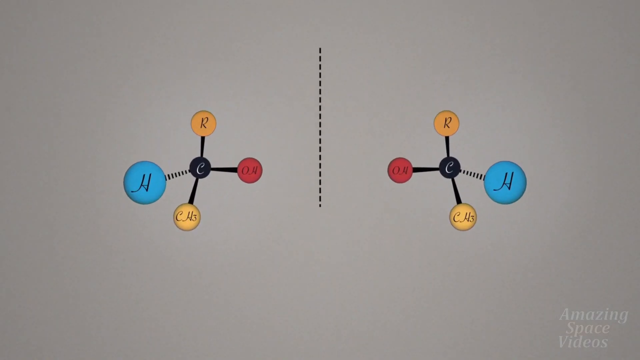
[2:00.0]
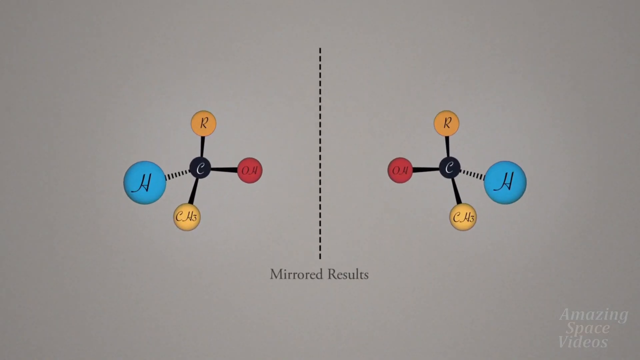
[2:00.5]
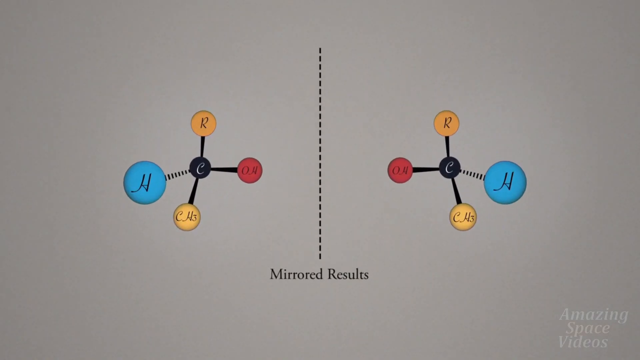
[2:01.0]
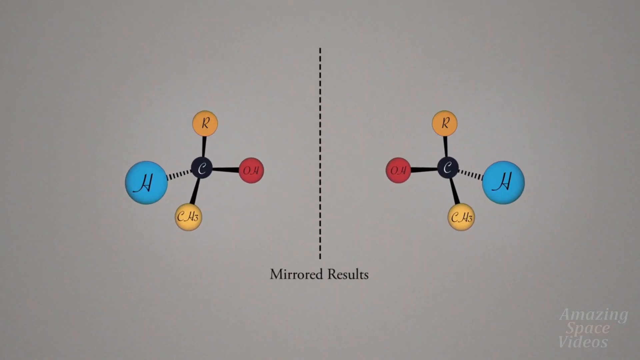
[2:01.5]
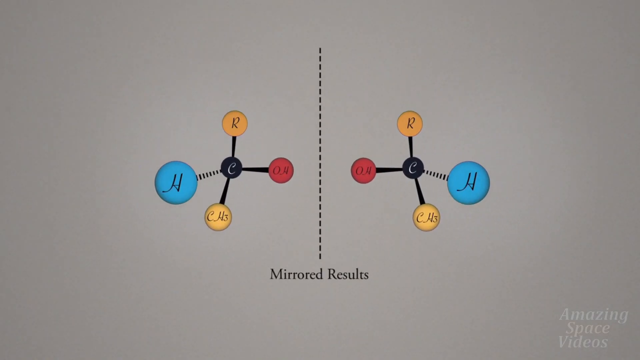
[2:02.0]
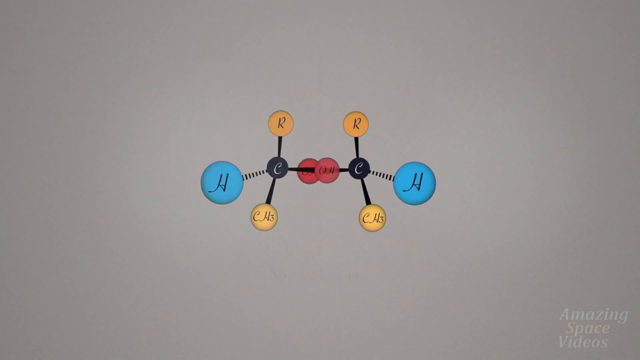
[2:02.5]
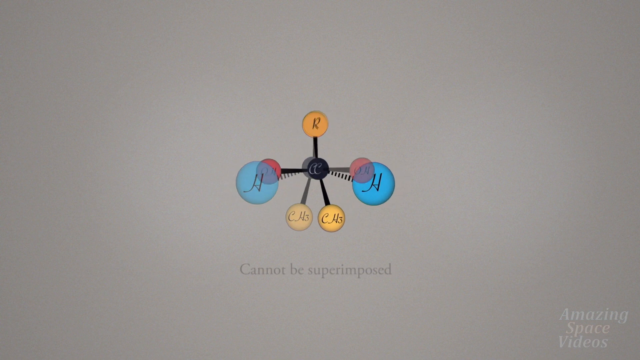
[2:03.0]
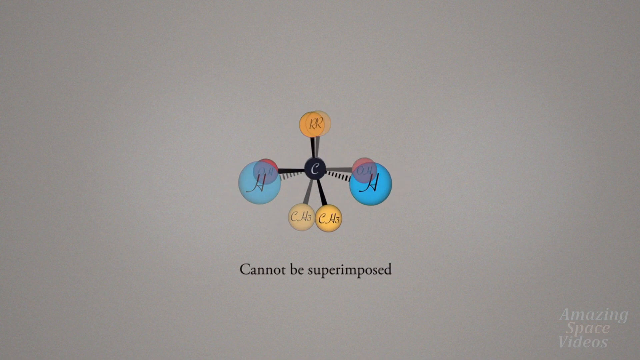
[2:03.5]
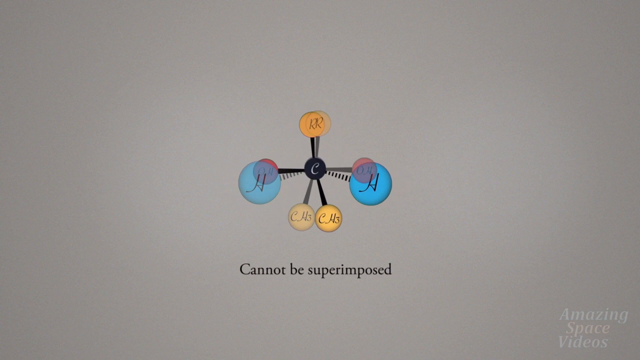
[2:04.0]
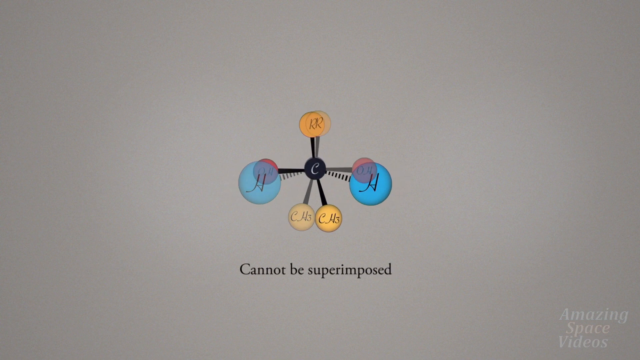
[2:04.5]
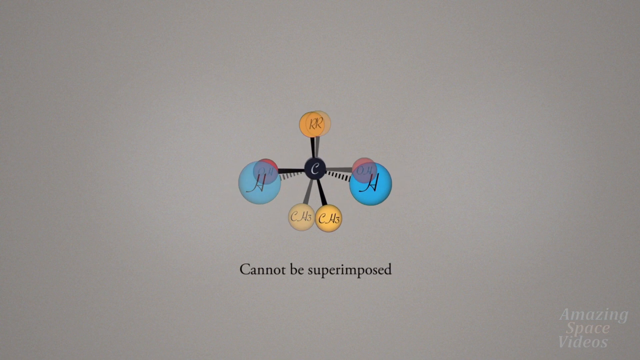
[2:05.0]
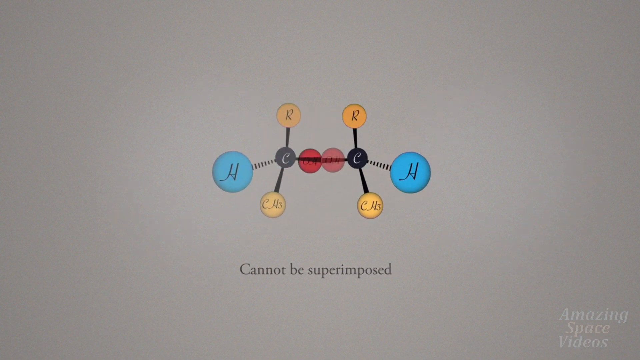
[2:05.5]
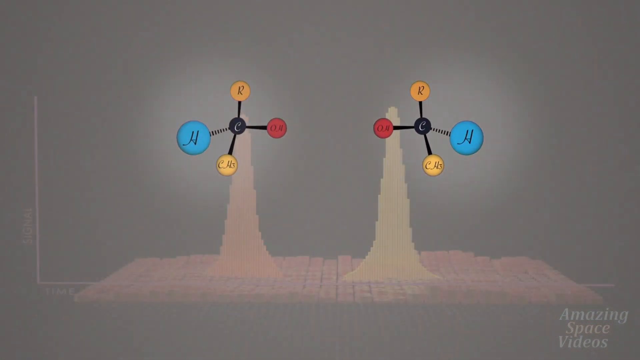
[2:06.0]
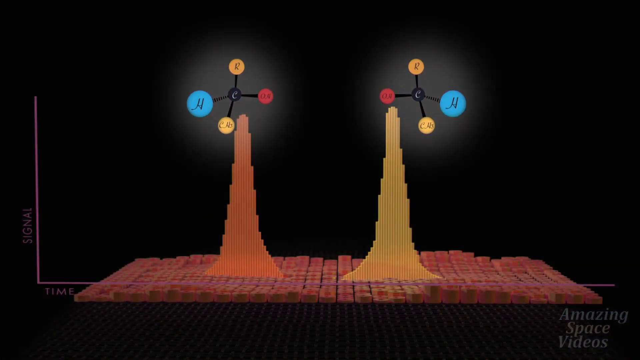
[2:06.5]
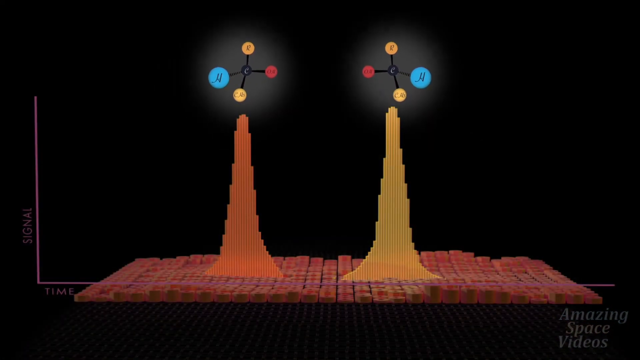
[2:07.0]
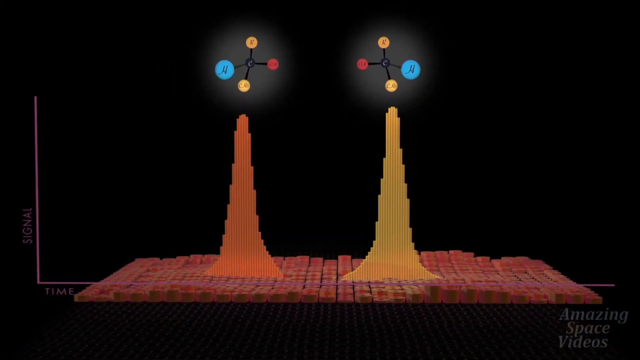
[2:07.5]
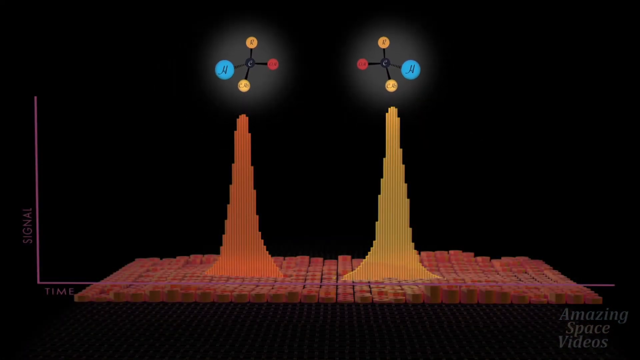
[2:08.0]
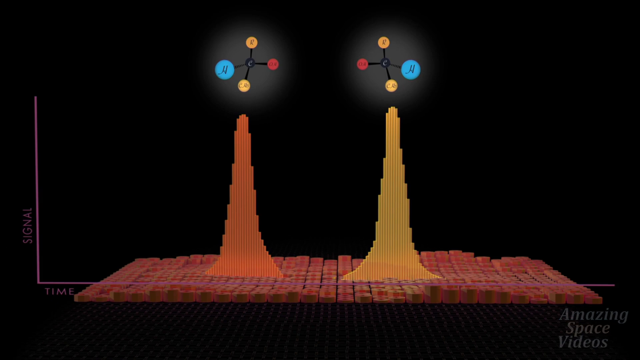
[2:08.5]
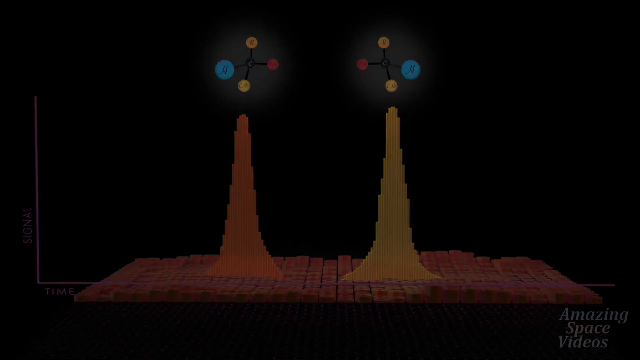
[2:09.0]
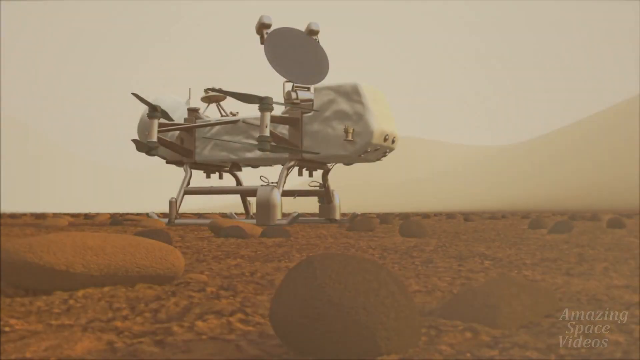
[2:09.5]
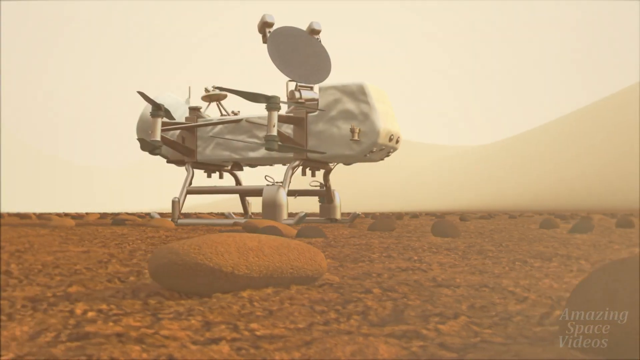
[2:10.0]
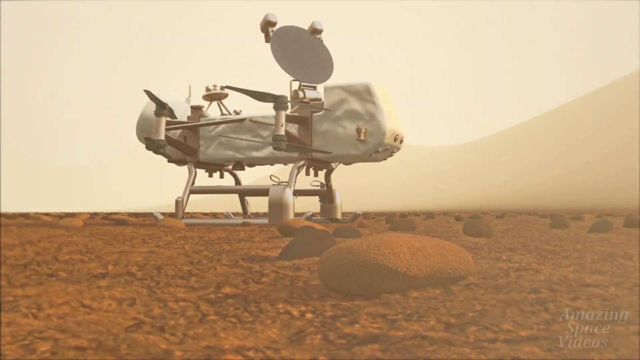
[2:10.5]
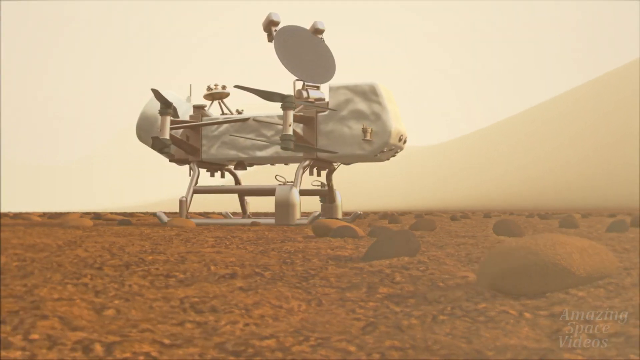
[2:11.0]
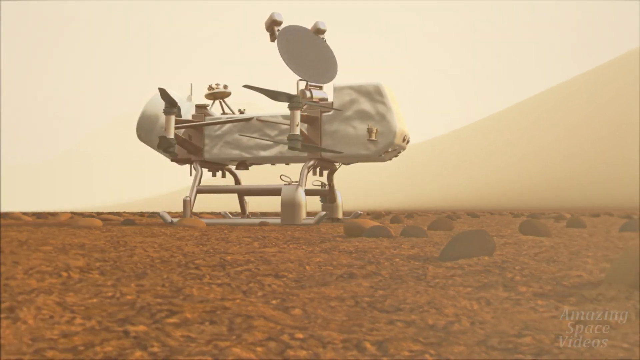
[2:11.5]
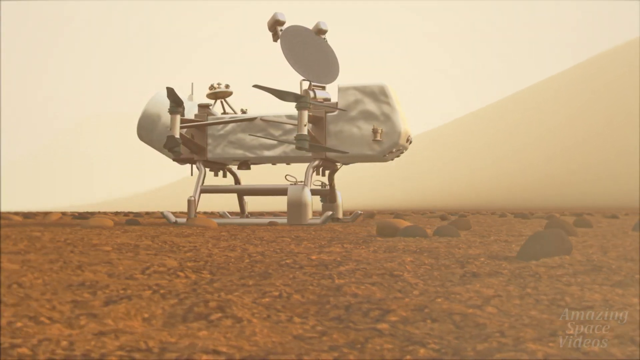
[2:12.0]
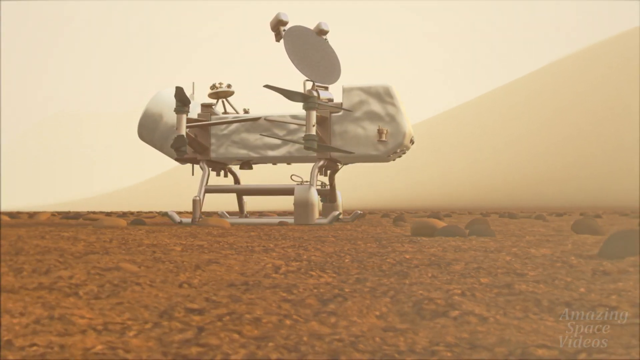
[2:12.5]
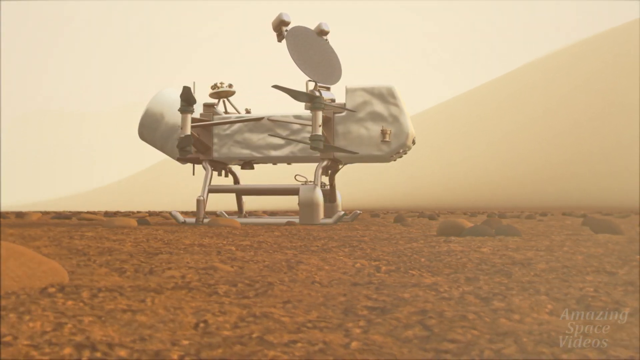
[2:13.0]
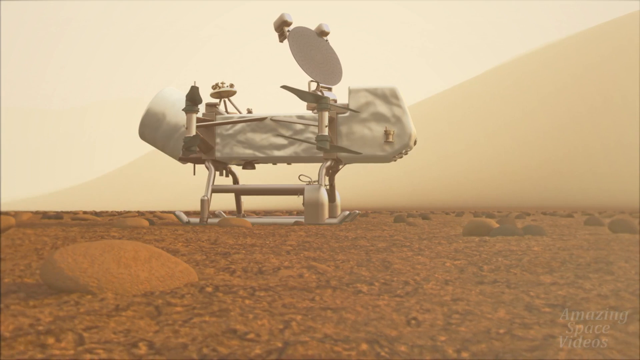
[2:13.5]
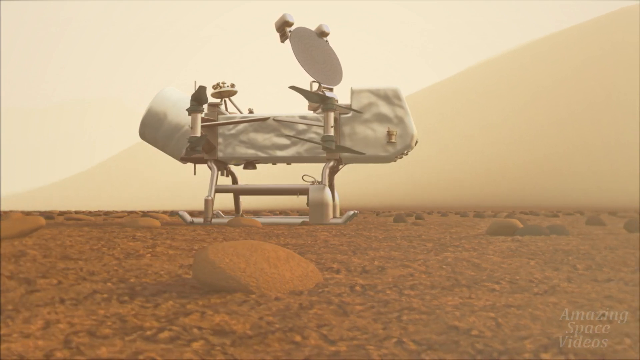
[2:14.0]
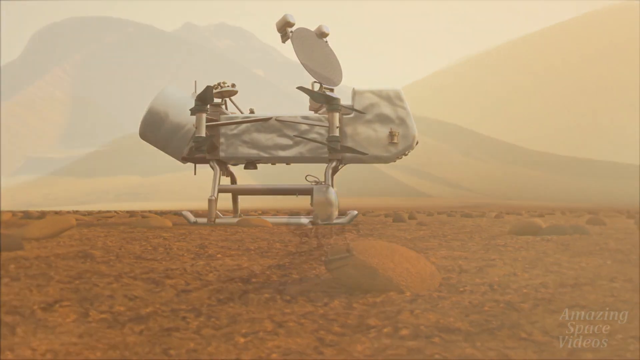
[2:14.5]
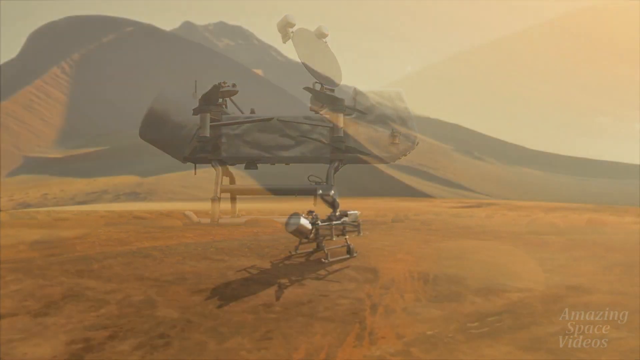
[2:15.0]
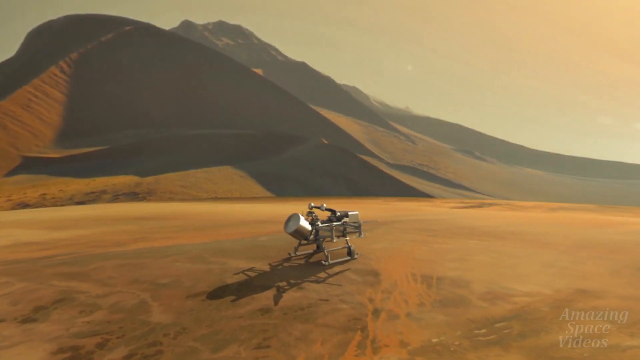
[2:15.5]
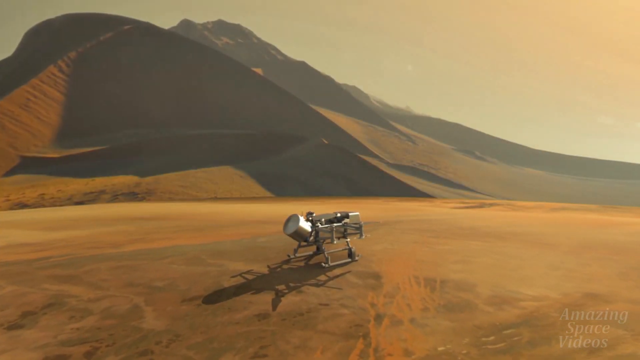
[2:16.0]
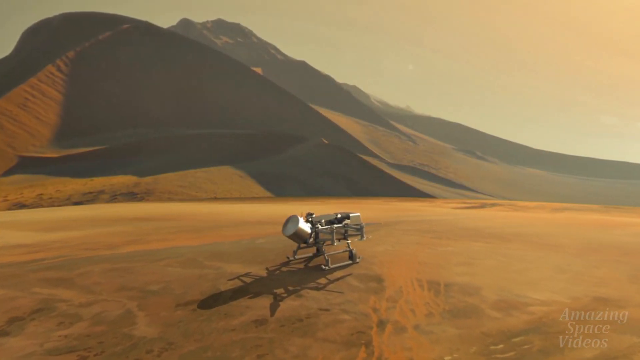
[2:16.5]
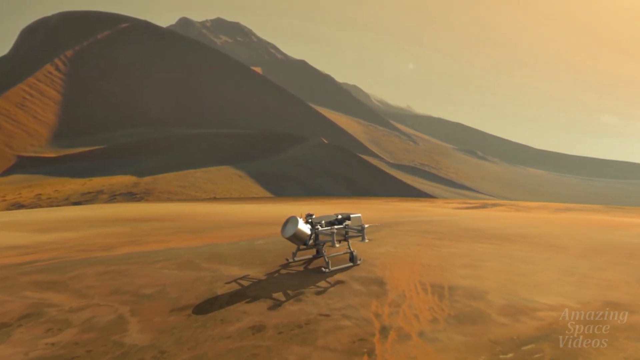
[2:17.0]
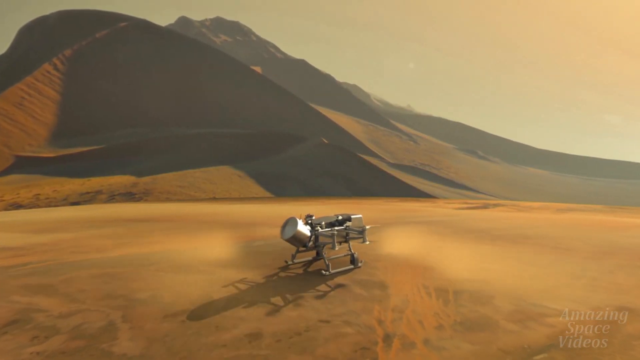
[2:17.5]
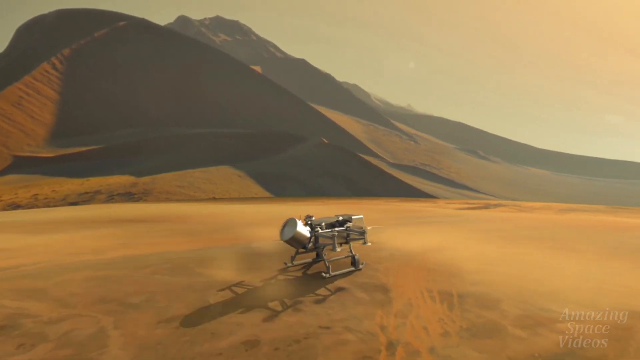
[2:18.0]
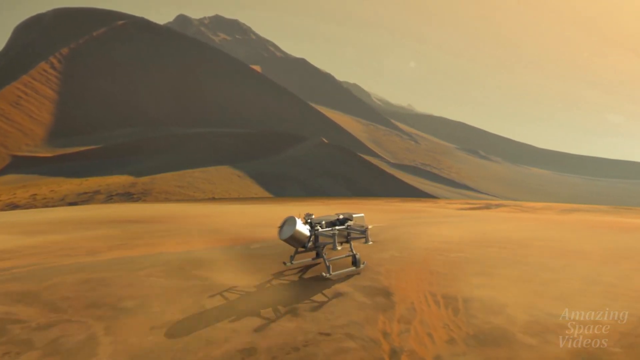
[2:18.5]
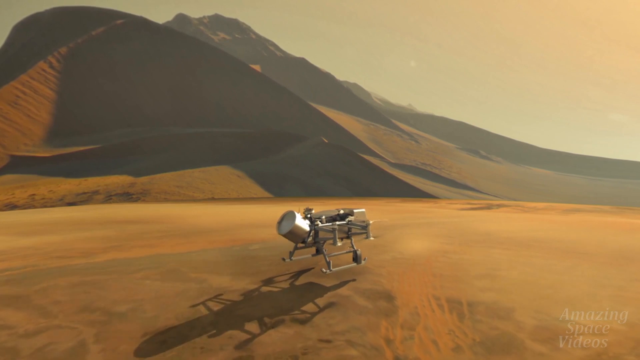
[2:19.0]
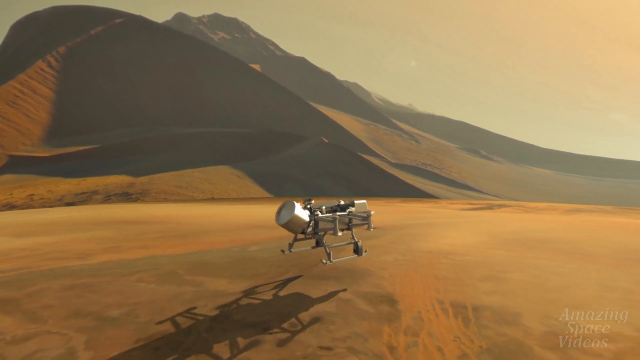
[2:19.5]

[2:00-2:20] A 3D rendering shows what seems to be some kind of atoms or a molecule, shown as two mirrored figures. In the center of the left figure is a black circle with the letter "C". From its top comes a yellow circle with the letter "R"; to the right is a red circle with the letters "OH"; at the bottom is a yellow circle that reads "CHS"; and to the left is a blue circle that reads "H". The figure on the right is exactly mirrored and opposite. A label reads "mirrored results". New text appears reading "cannot be superimposed", and the two figures are placed on top of each other, showing that they cannot be superimposed. A large bar chart then appears with the two figures on top of it; the left bar is orange and the right one is yellow. The screen fades to black and cuts to a large propeller drone sitting on two railings on a flat brown surface. The camera slowly spins around it, then zooms out as the drone spins its propellers and launches off the ground.